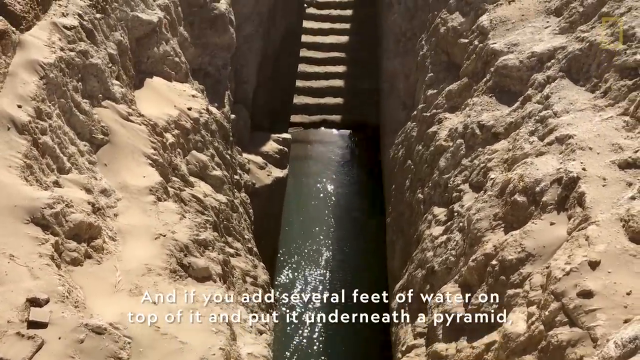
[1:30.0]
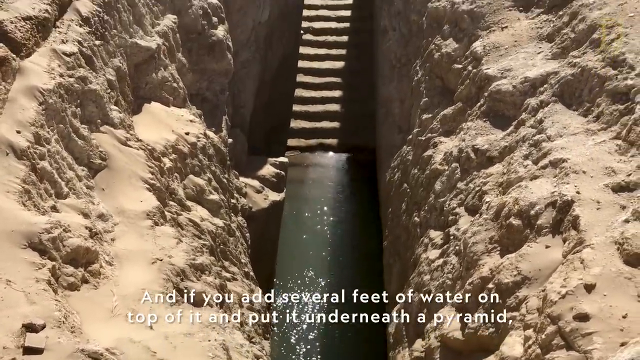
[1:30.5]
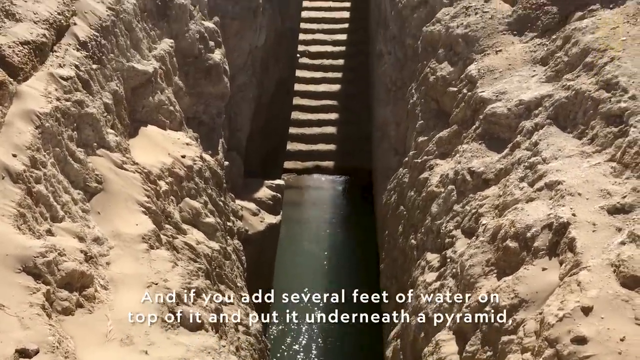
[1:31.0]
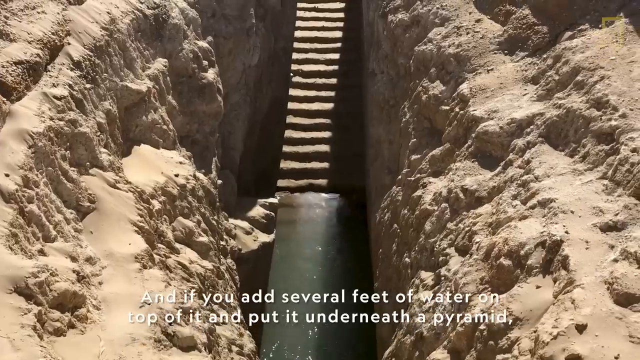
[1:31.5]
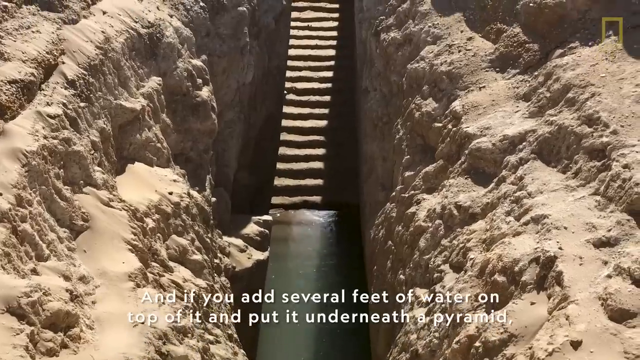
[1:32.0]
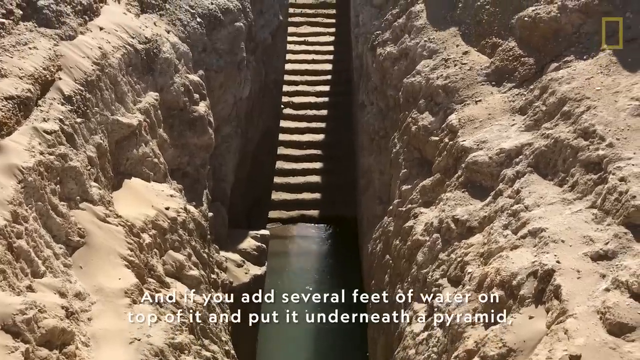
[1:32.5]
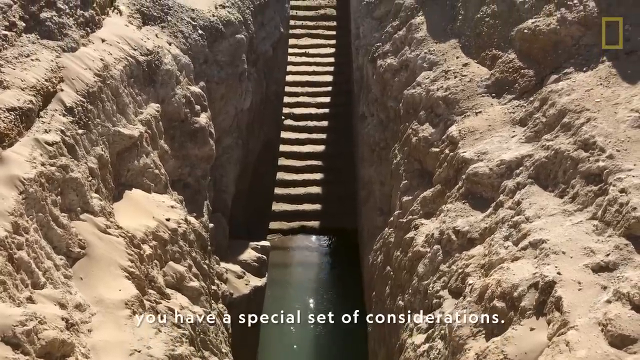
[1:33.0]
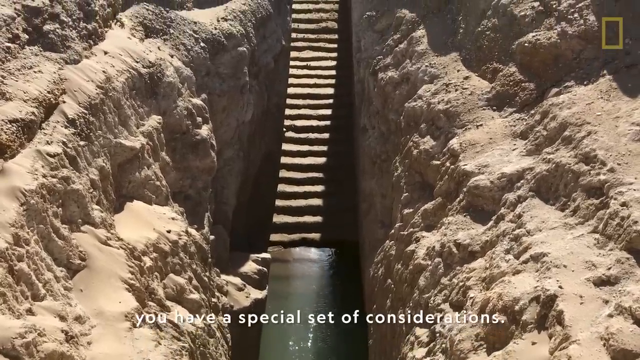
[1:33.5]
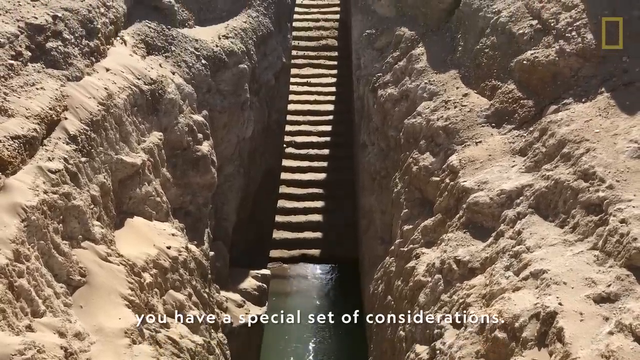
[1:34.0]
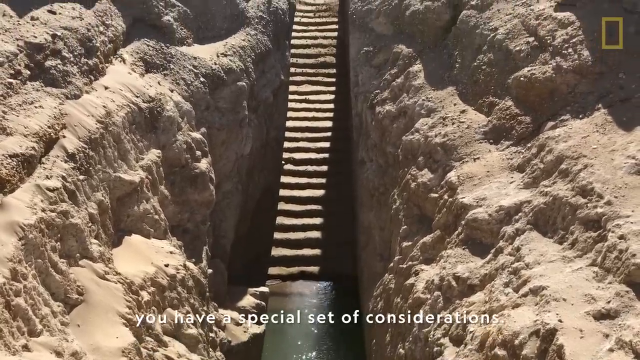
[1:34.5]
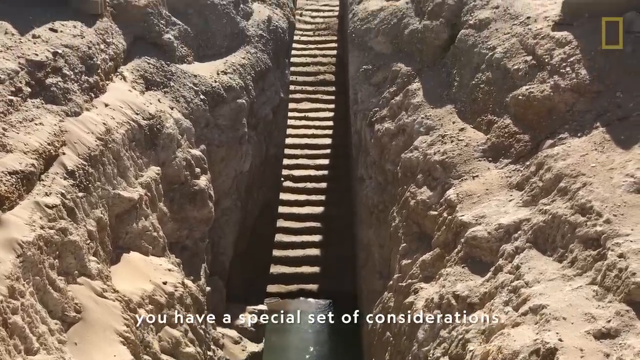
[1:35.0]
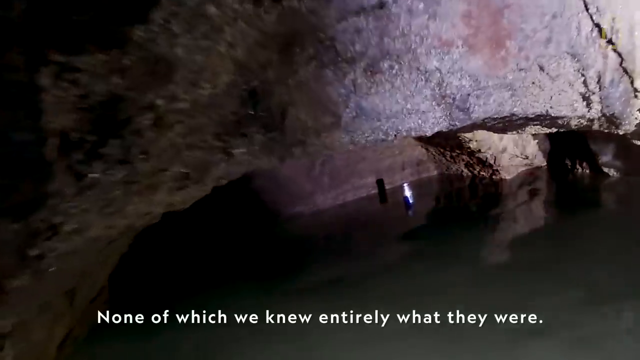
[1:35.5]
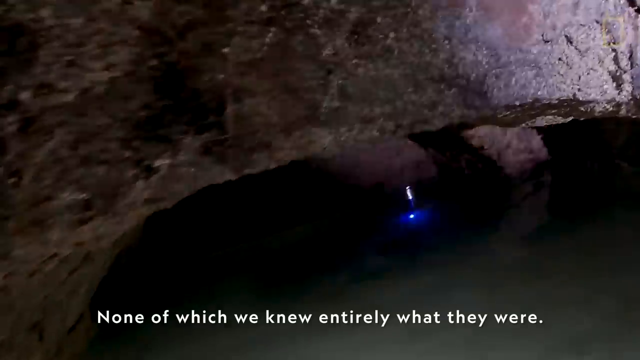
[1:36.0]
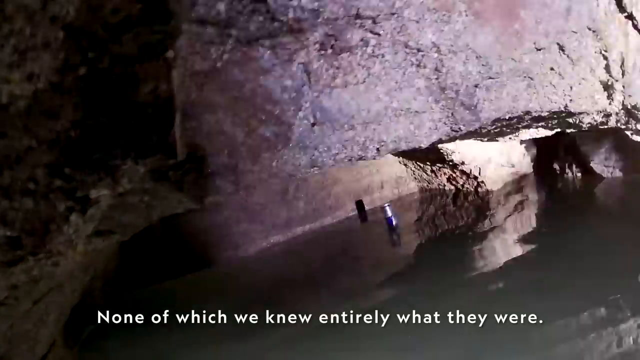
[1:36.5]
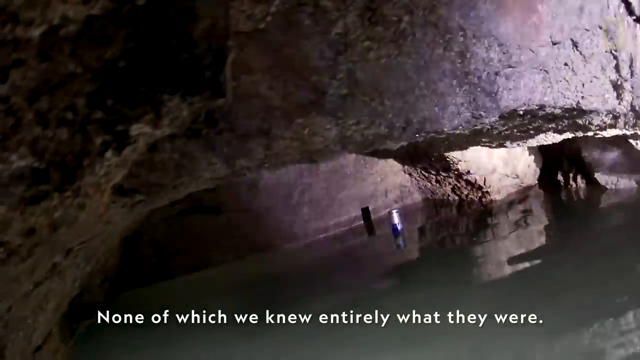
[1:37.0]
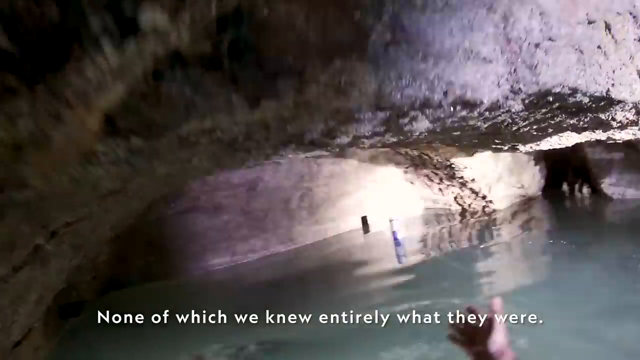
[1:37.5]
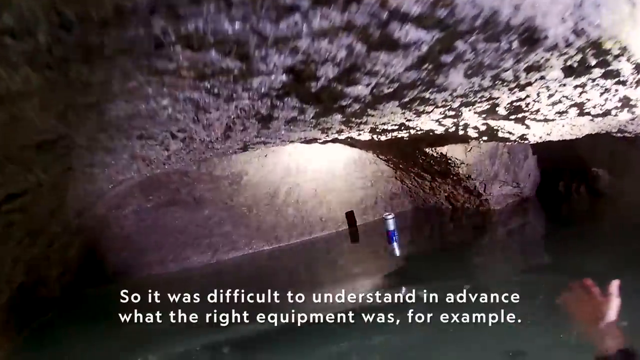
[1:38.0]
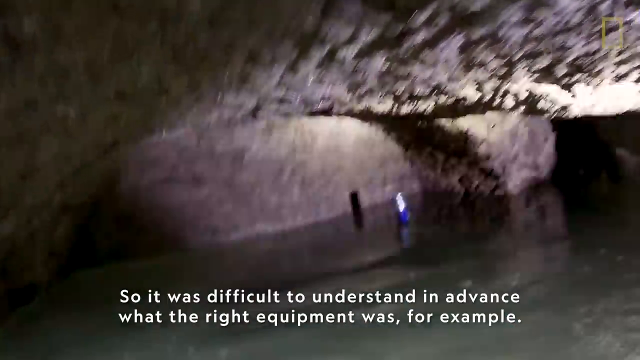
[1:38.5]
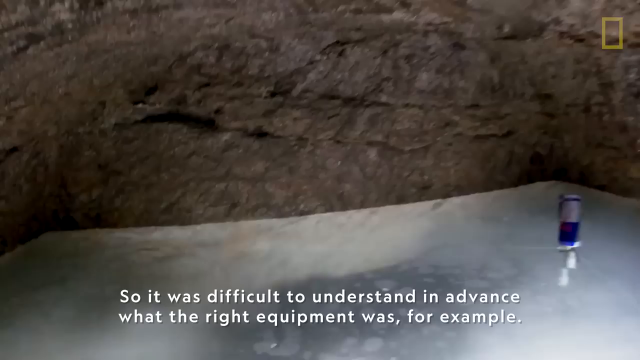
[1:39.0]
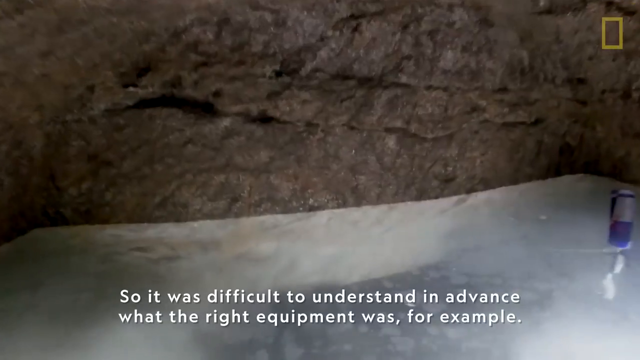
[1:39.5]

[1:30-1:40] Water surrounds the tombs, with a pyramid on top. There are many steps leading down to the level where the water is, and from there the tombs are still beneath the water, encased under the pyramids.